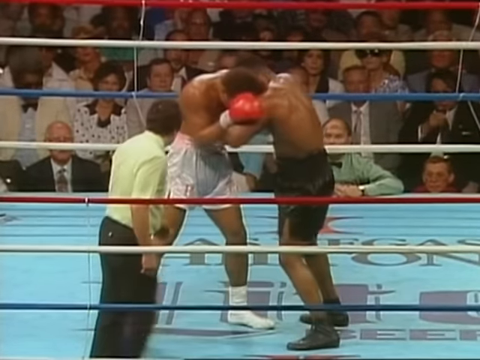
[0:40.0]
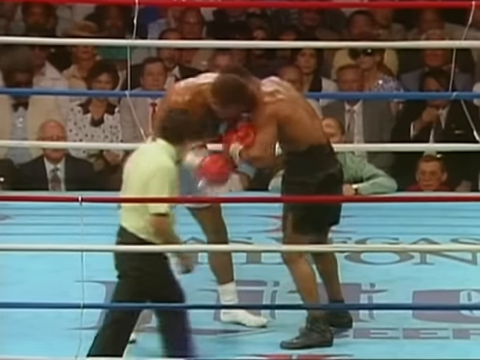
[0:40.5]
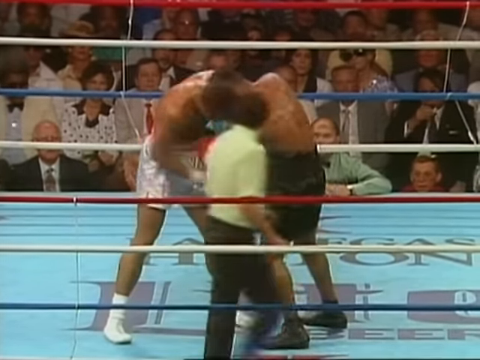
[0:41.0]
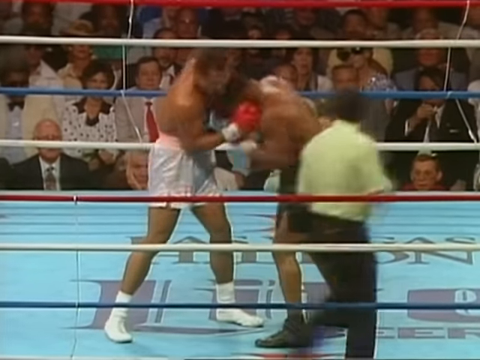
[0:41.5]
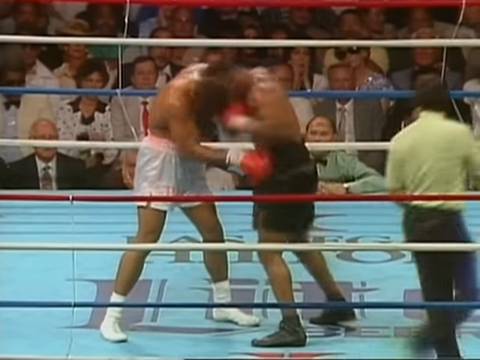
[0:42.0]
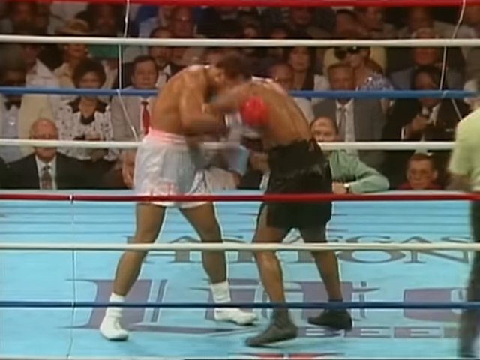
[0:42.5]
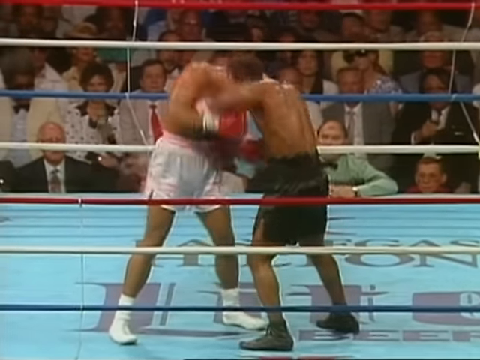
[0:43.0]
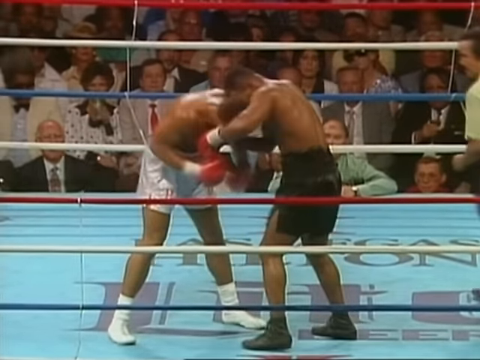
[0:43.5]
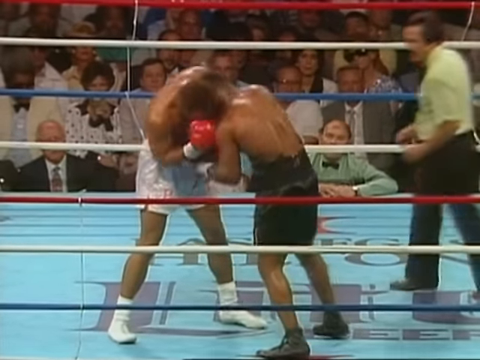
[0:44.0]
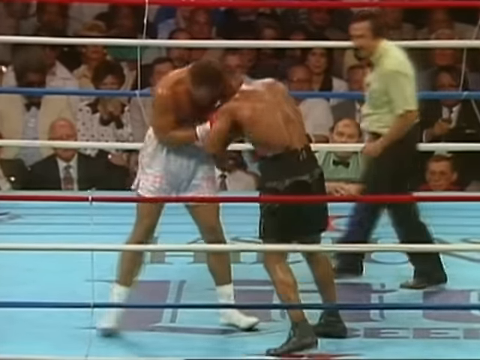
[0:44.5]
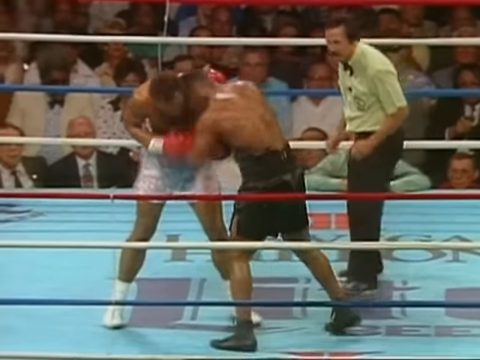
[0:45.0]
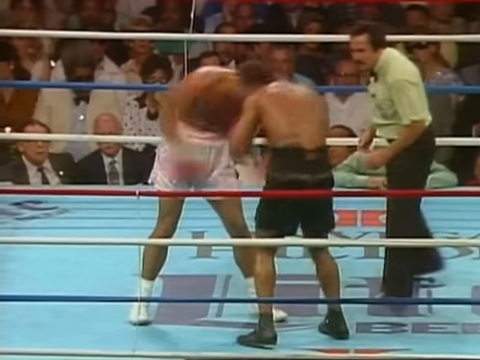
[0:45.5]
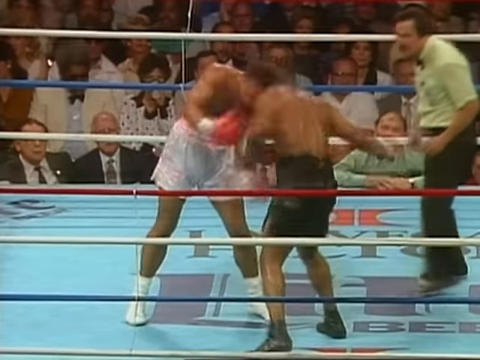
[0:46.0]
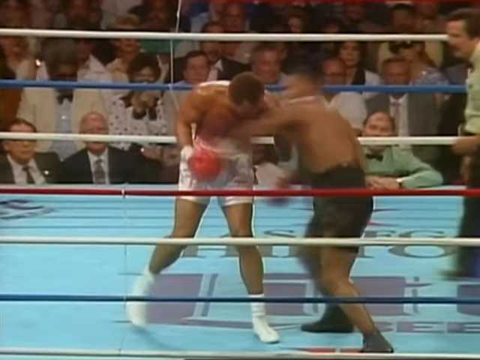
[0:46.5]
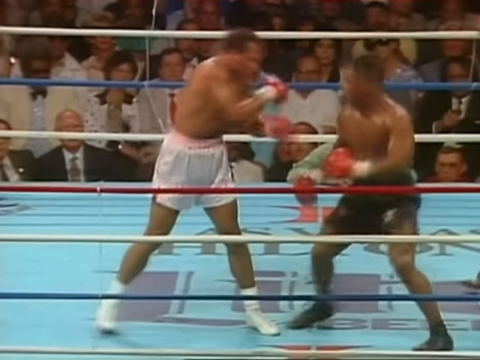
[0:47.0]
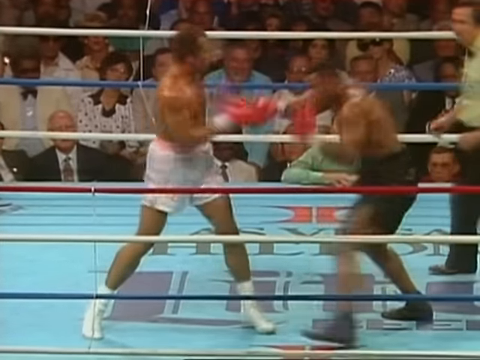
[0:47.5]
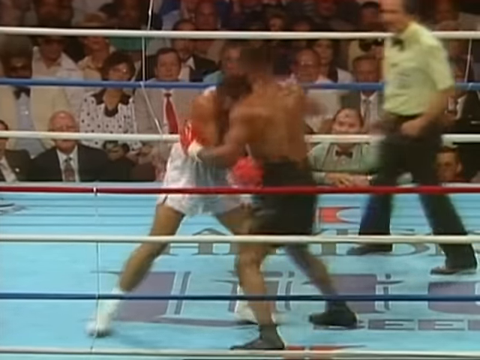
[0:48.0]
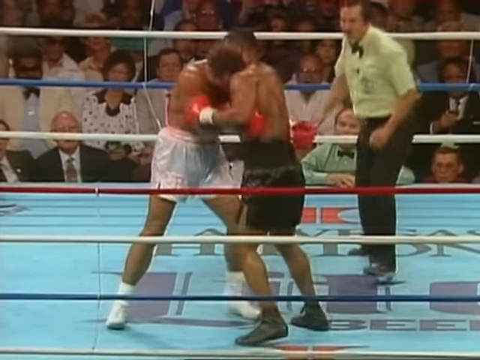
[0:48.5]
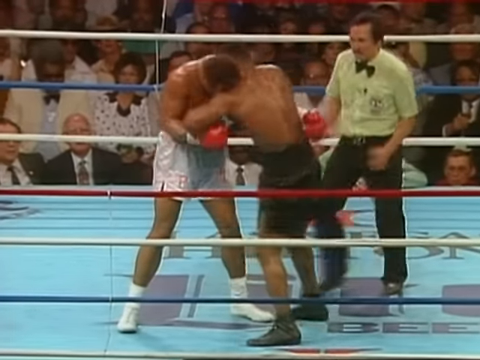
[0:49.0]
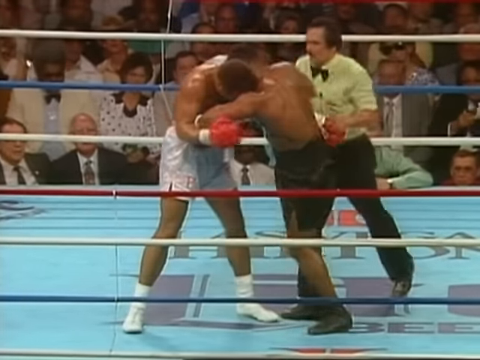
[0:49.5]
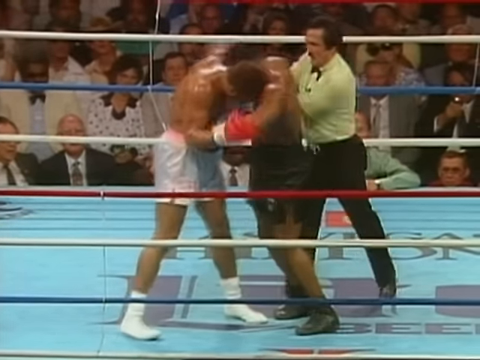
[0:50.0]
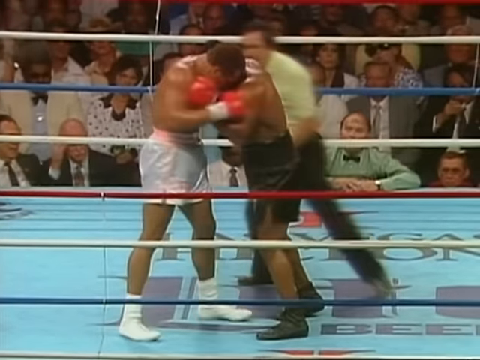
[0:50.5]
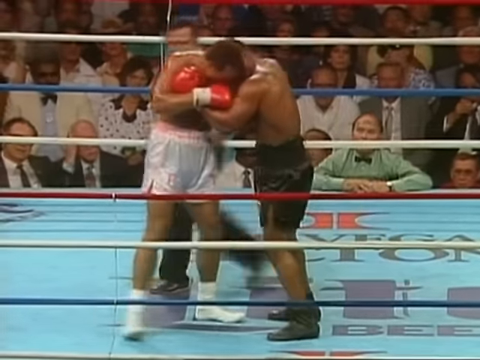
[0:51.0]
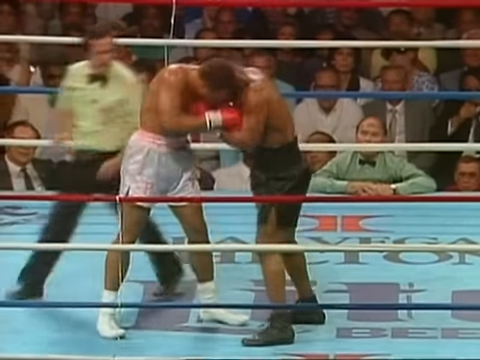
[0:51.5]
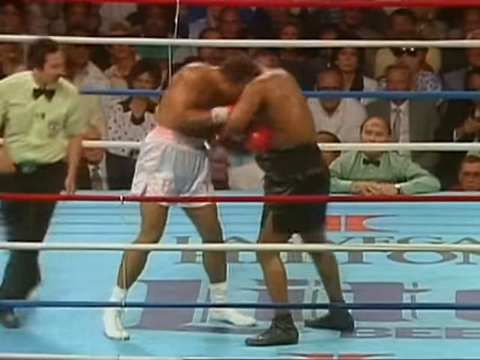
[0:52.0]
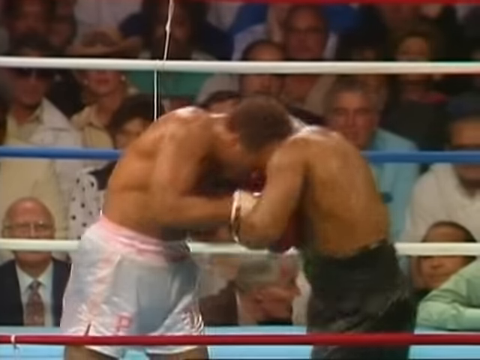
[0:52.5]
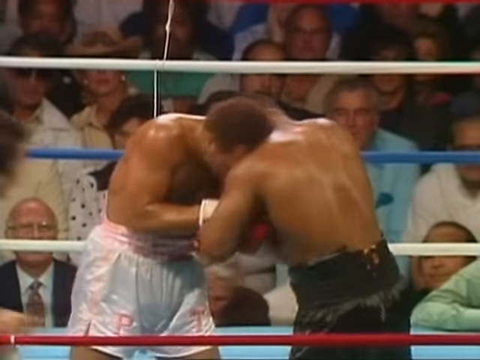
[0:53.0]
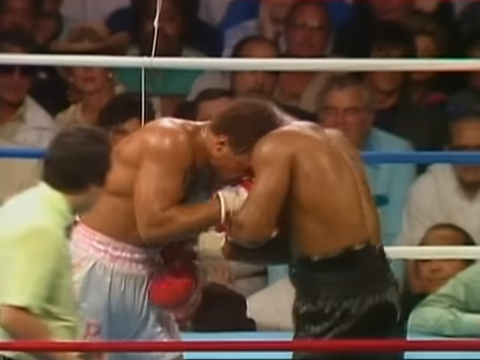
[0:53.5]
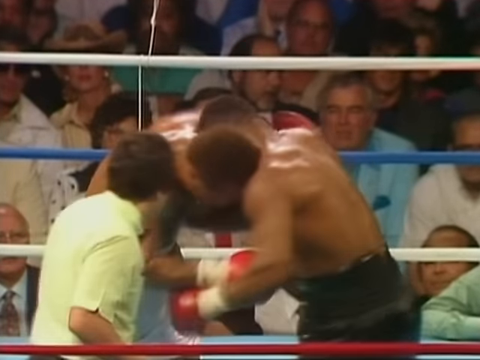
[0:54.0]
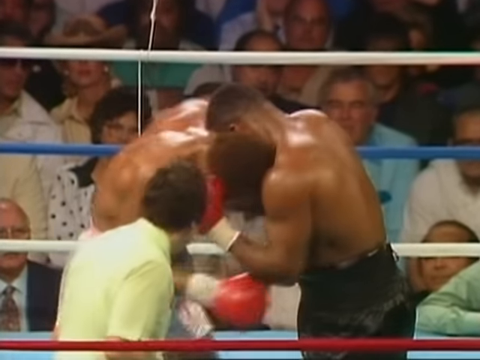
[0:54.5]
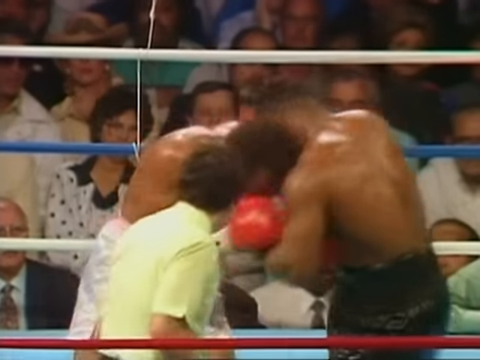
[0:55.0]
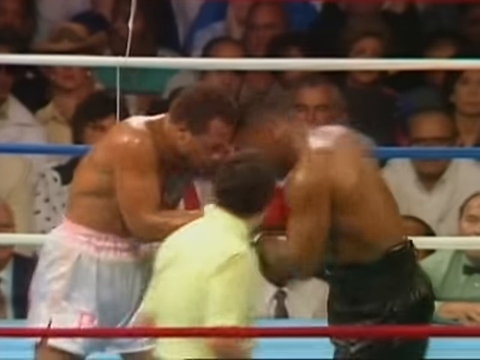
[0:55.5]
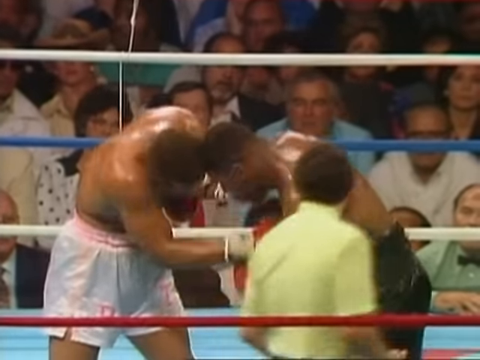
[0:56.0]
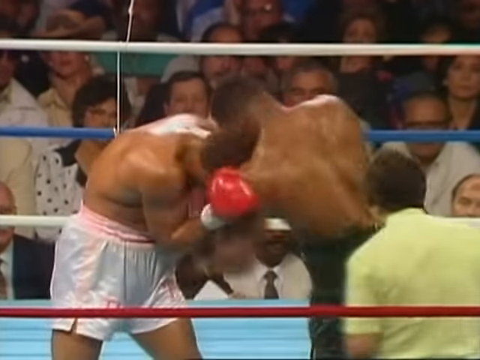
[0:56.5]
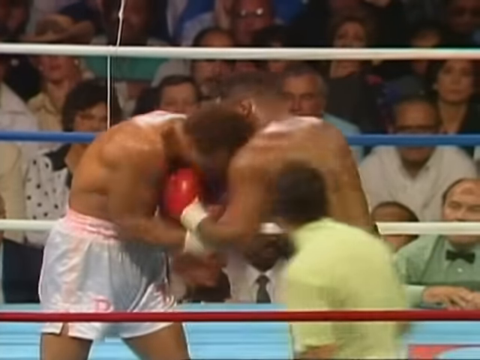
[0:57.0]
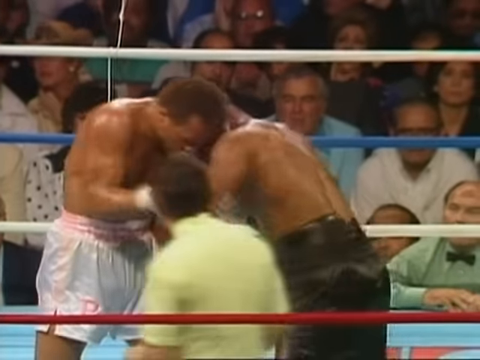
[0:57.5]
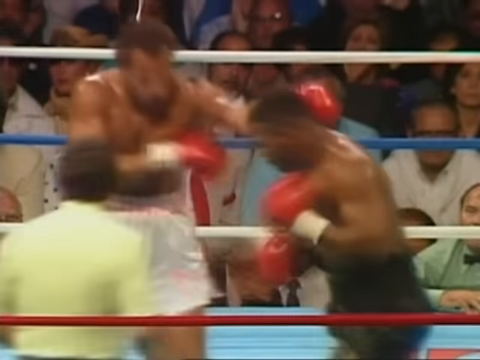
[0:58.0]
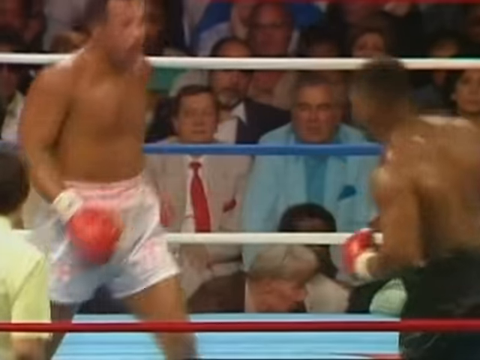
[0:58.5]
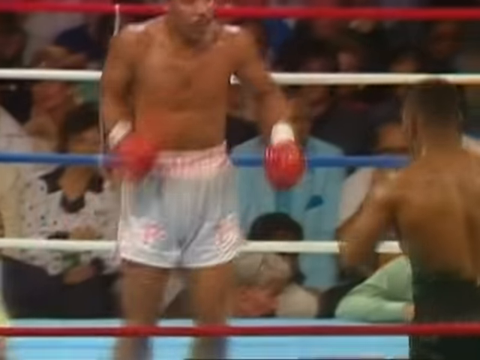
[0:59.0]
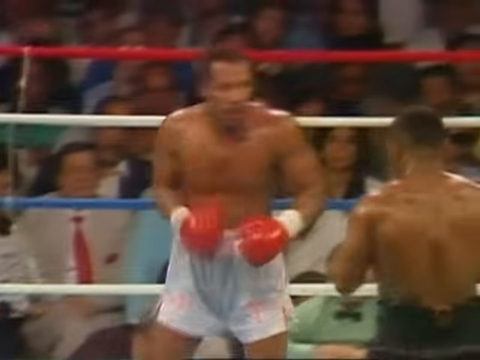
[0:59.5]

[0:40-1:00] The boxers are in the center of the ring, grabbing each other slightly. The boxer in white trunks throws a very weak hit with his right glove to Tyson's shoulder, and Tyson does much the same; they mostly grab while trying to land a few light hits. Then Tyson throws a strong right uppercut that really lands on the boxer in white trunks. Tyson backs up and goes in for a left hook. They grab each other again in the middle of the ring, each with his head on the other's shoulder. Tyson backs up a second and throws a right hook toward the midsection, and the two start backing up.